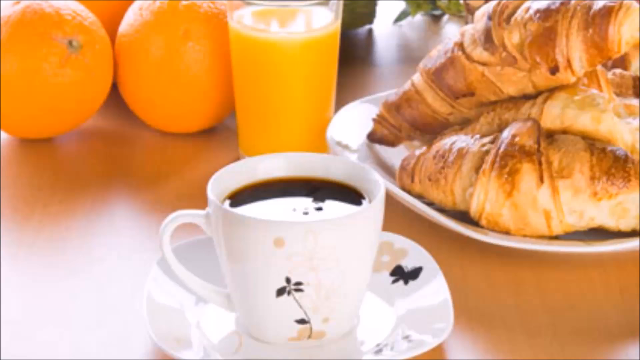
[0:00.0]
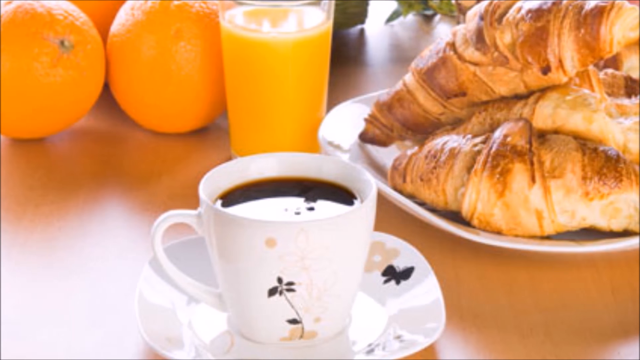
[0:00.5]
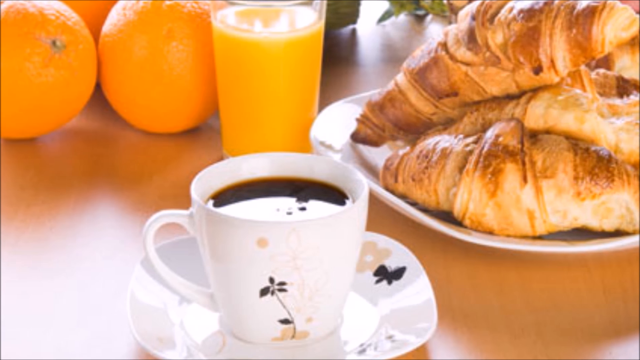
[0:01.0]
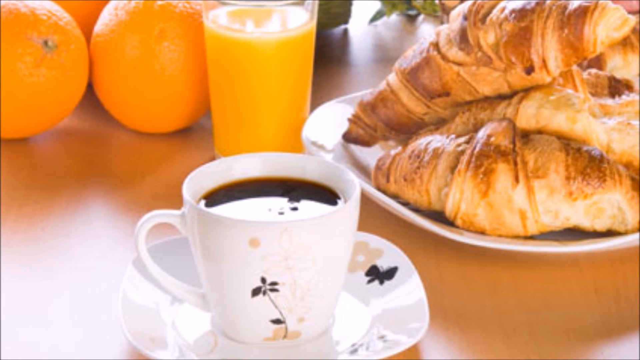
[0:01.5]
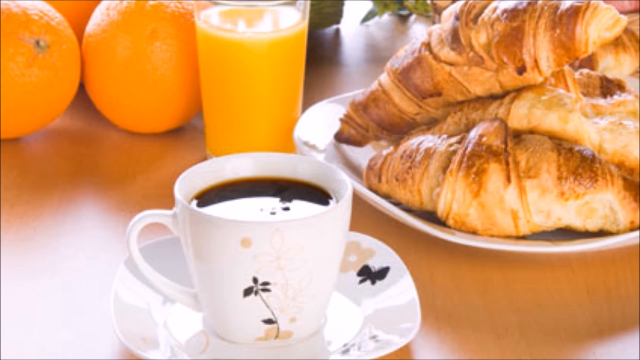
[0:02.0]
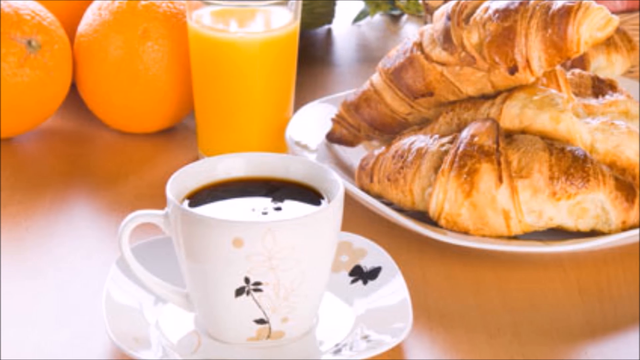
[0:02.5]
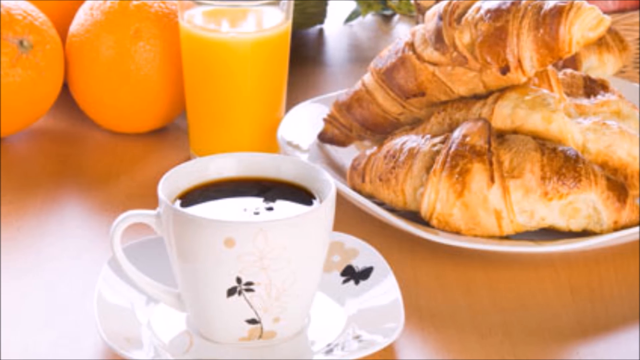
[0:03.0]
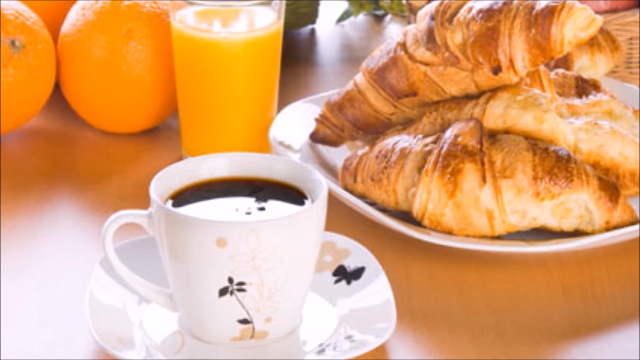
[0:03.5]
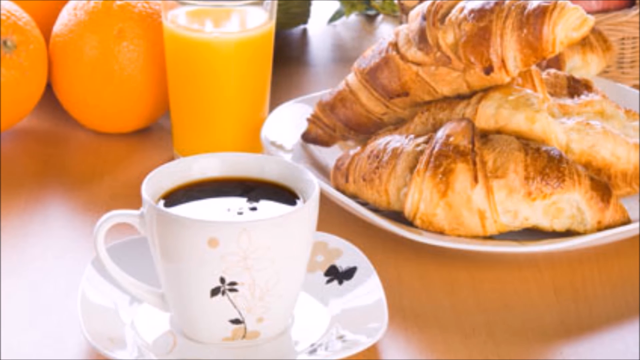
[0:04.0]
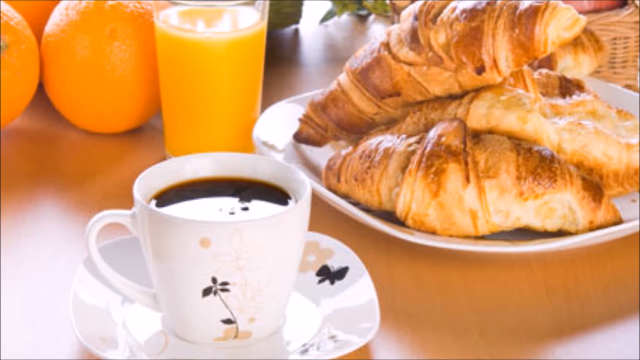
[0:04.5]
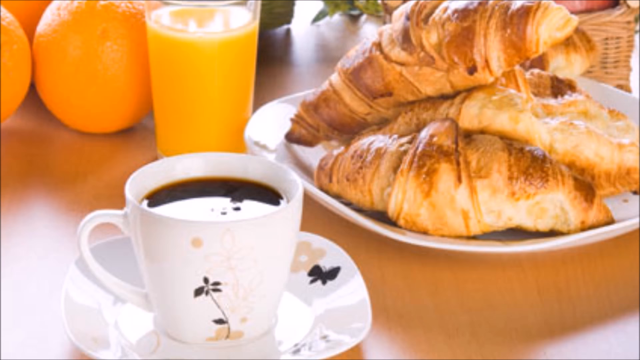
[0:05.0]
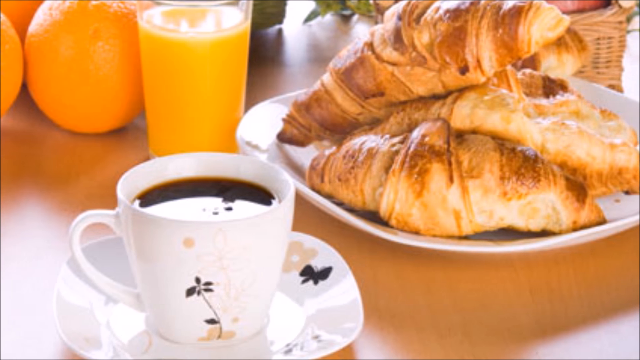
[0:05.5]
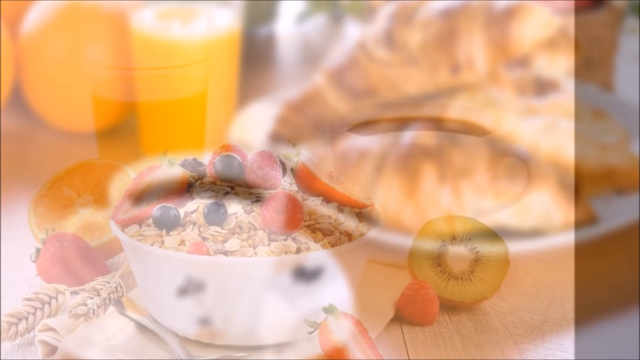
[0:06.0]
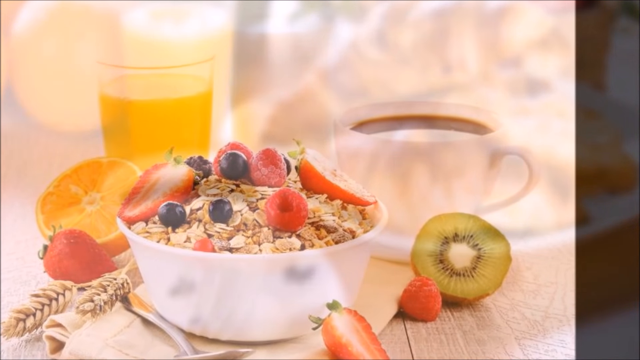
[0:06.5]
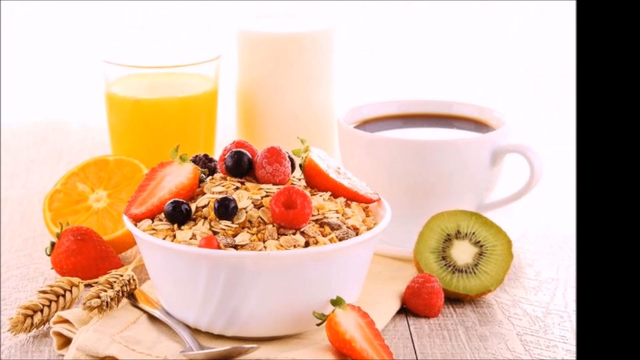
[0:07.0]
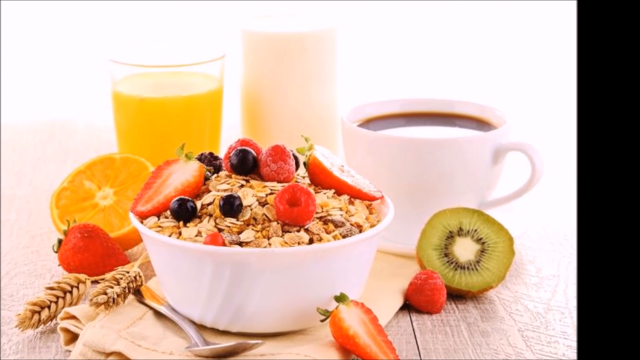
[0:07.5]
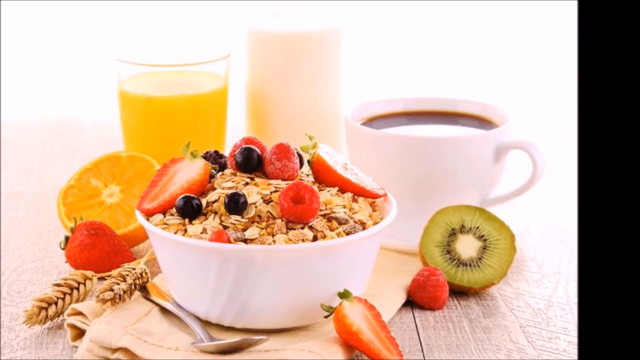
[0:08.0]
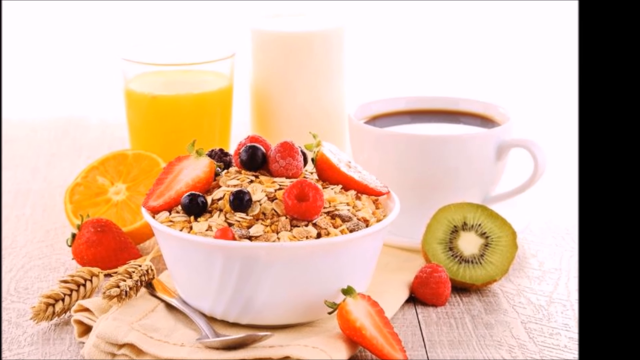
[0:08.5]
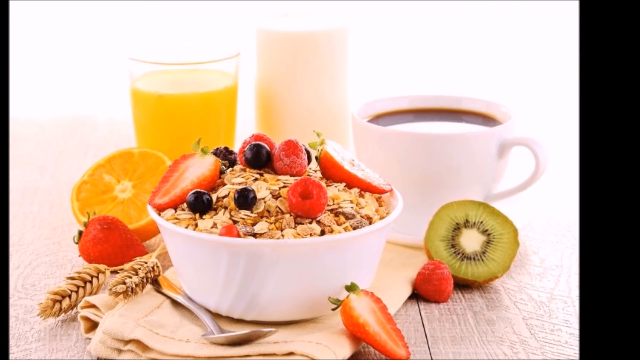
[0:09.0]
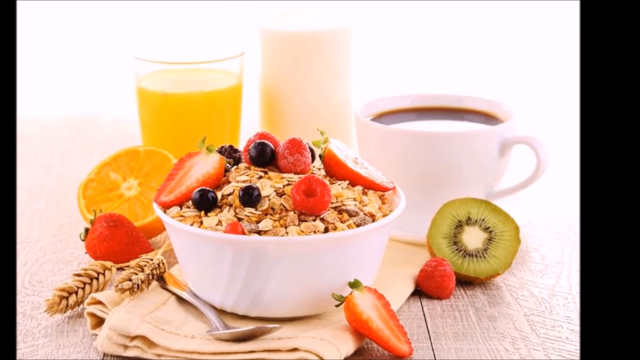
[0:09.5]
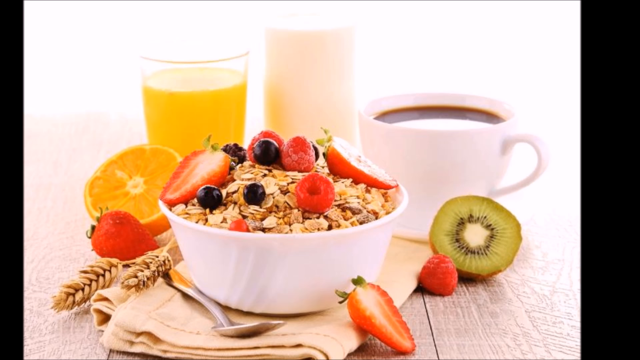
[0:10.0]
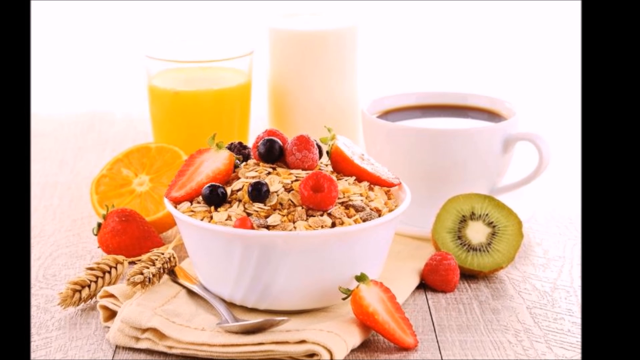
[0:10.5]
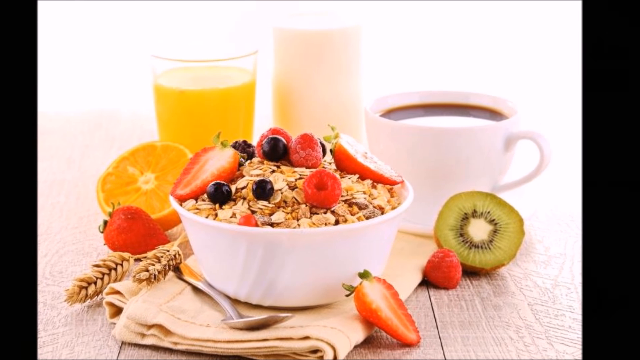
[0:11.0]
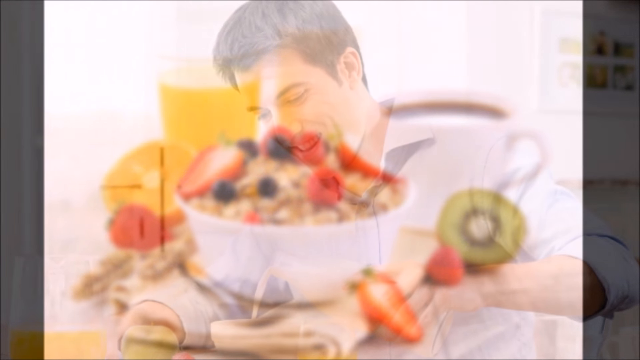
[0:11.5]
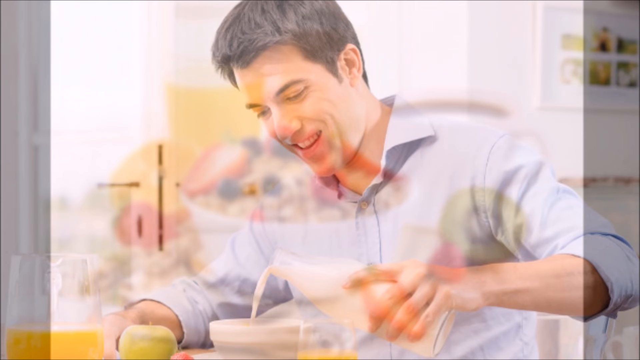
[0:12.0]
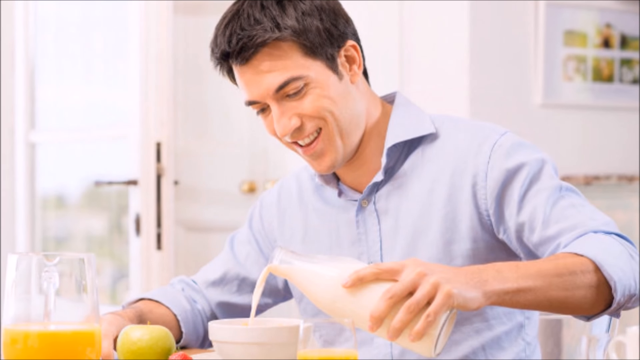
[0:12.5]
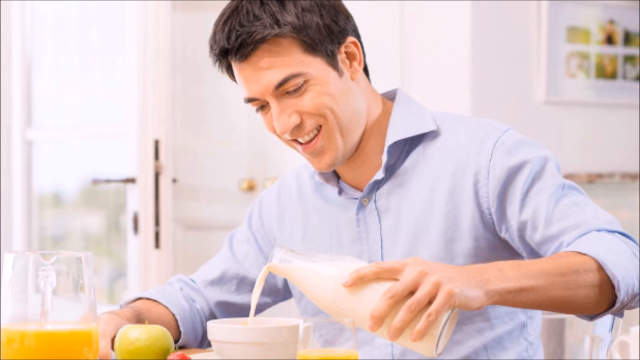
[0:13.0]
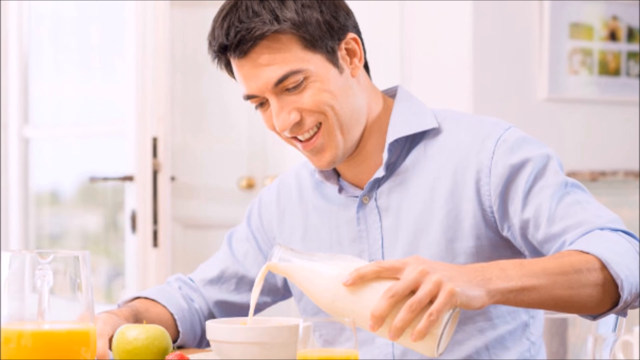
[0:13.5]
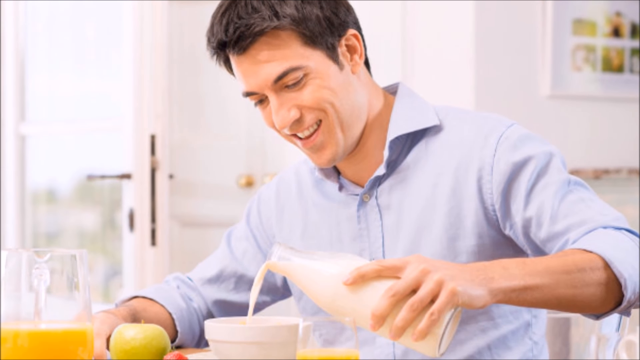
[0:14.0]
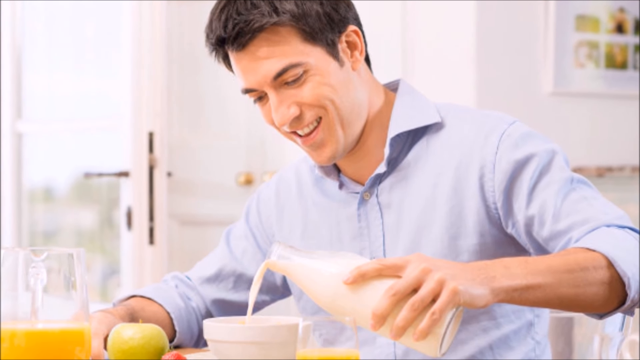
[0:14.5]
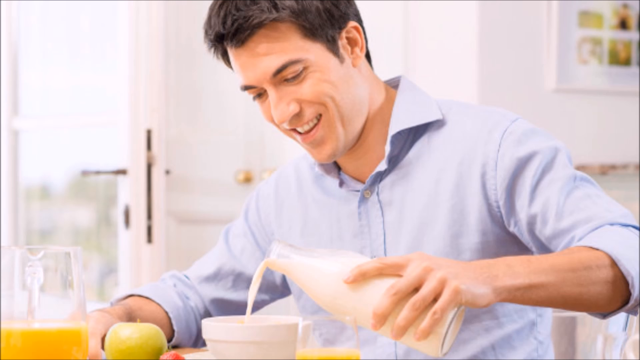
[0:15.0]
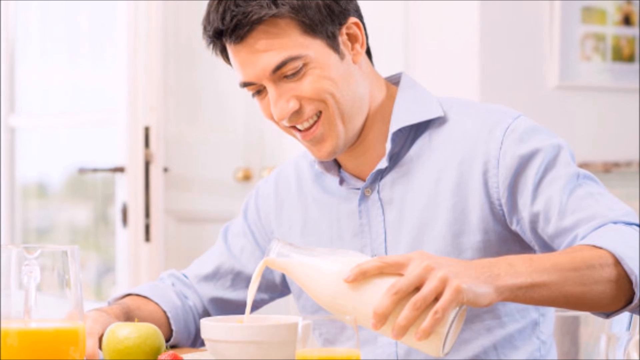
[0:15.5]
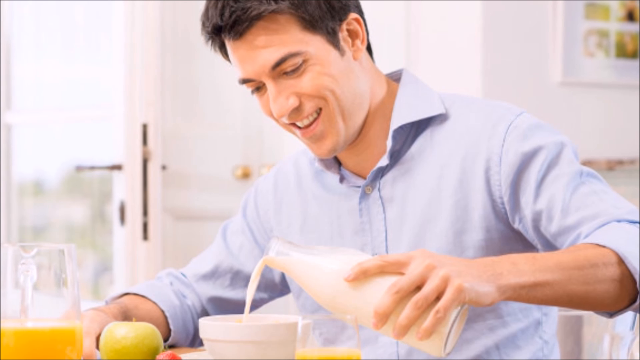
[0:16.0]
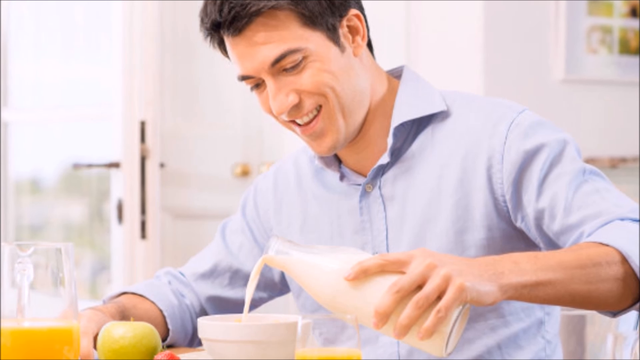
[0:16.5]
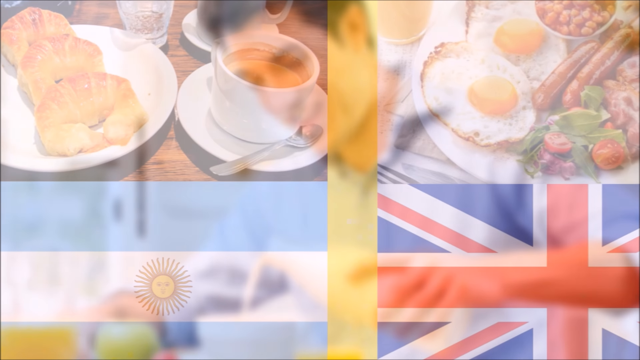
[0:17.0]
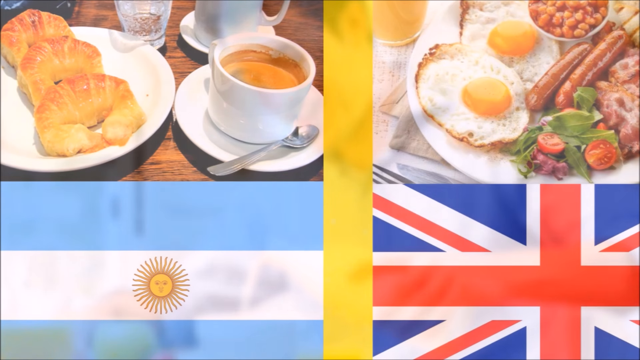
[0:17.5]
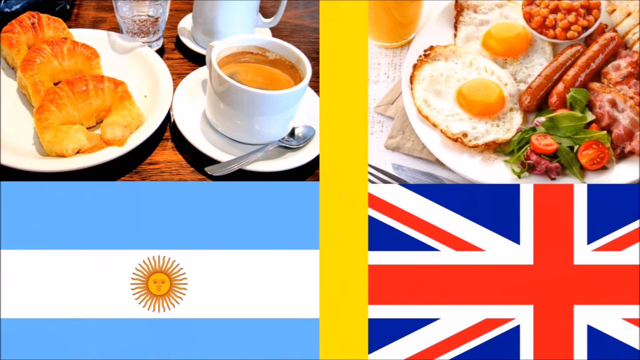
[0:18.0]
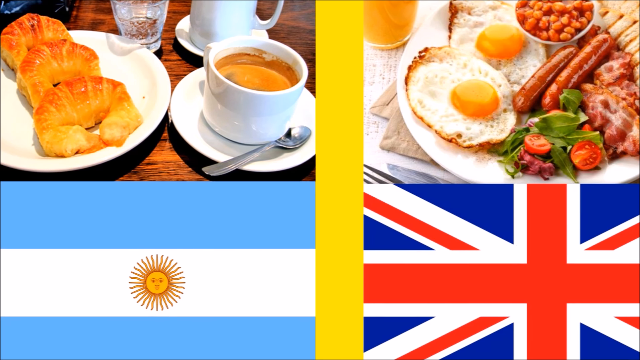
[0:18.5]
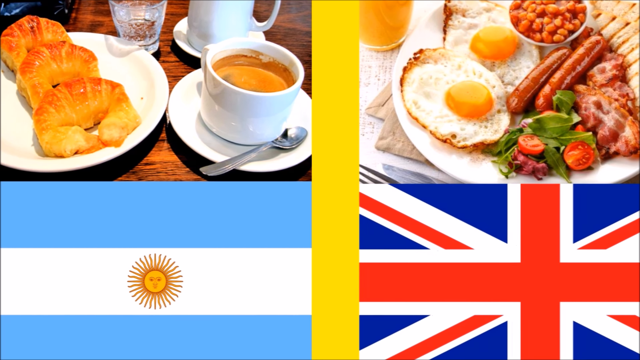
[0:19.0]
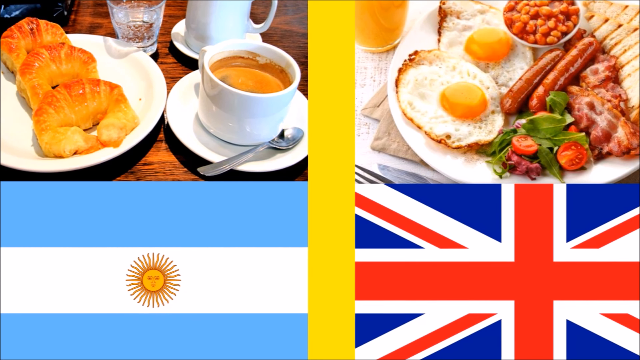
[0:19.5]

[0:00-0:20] On a light brown table there are a few oranges at the upper left, a glass of orange juice in the upper middle in front of the oranges, and, to the right of and in front of that glass, a white plate full of croissants. In the very front middle is a white cup of coffee with a subtle black and brown floral design, resting on a white plate that has a beige flower with a black butterfly on the rim. The view pans to the right, showing more of the croissant plate. It then fades to an image of a white bowl of oatmeal covered in blueberries, strawberries and raspberries. A cup of coffee is in the background to the right, next to the oatmeal. Directly in front of that is a kiwi cut in half, its cross-section facing straight at the viewer. Two stalks of wheat are to the left of the bowl, with a strawberry behind the stalks, a halved orange behind the strawberry, and a glass of orange juice behind the orange. A metal spoon is in front of the bowl of oatmeal to the left. The view zooms out. It cuts to a still image of a Caucasian man with short brown hair and a light blue shirt in a white kitchen, pouring a bottle of milk into a ramekin with his left hand, and the view zooms in on the milk. It then cuts to an image with the Argentinian flag at the bottom left, the British flag at the bottom right, a thick yellow stripe in the middle, and different types of food at the upper left and upper right.